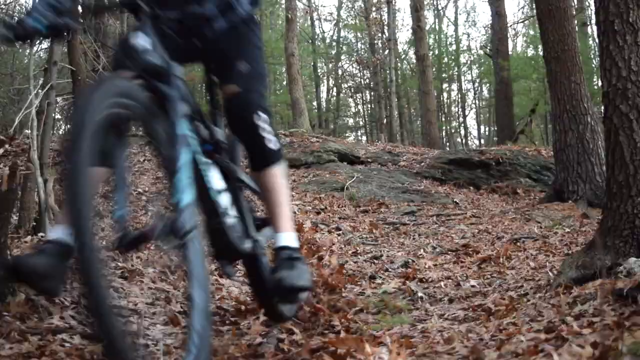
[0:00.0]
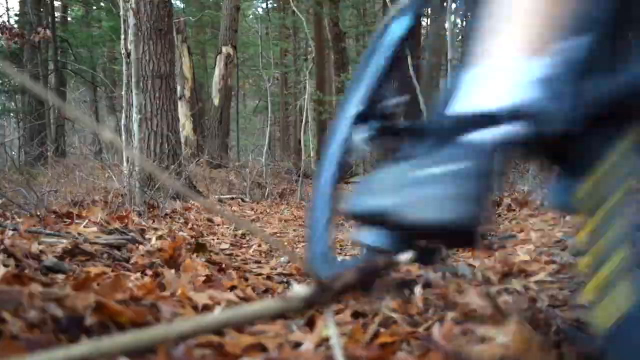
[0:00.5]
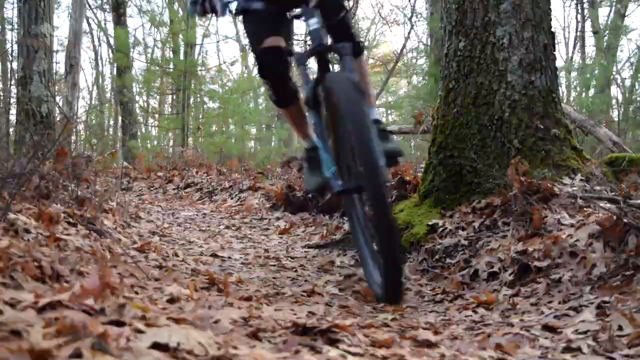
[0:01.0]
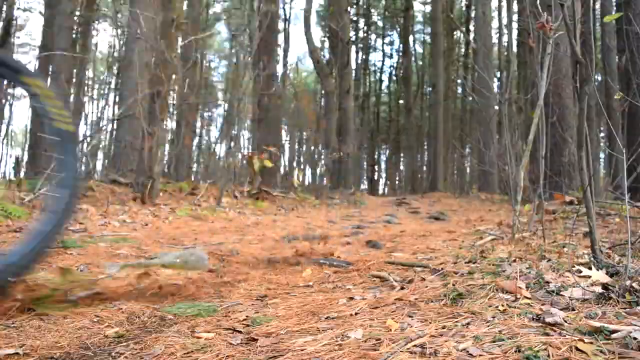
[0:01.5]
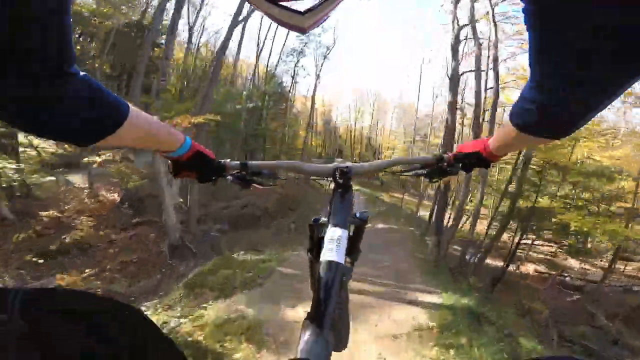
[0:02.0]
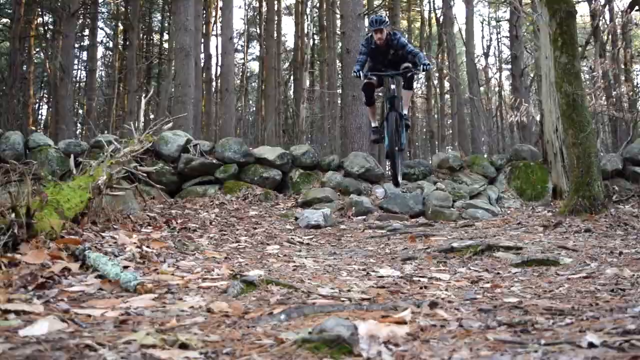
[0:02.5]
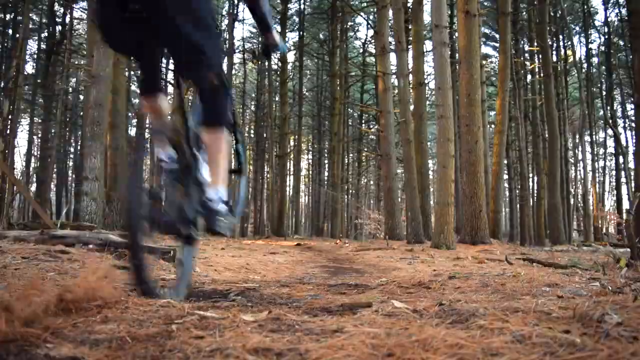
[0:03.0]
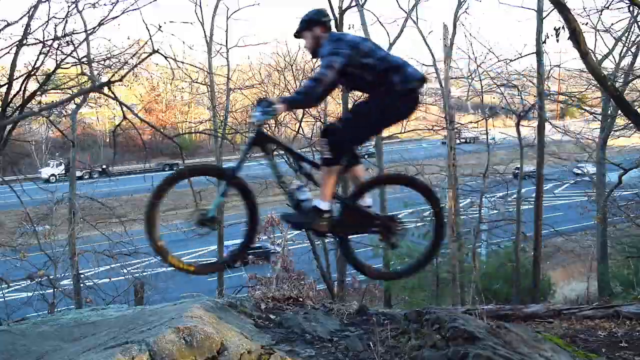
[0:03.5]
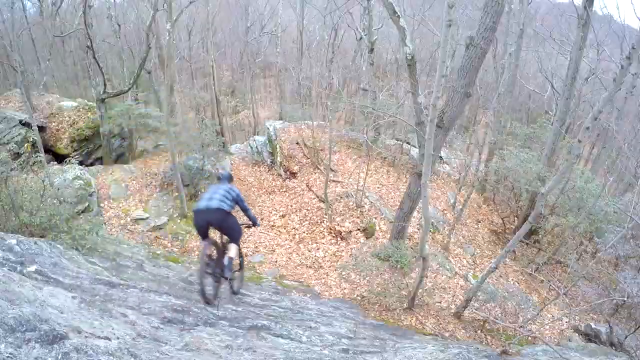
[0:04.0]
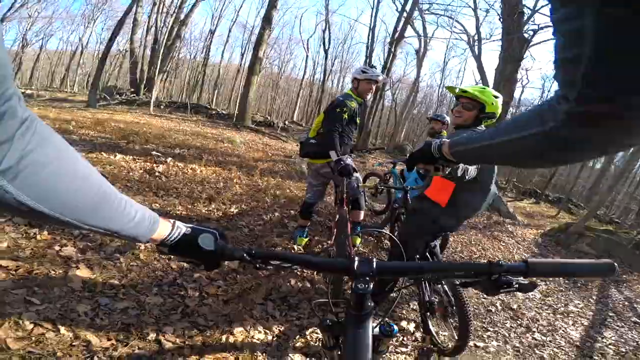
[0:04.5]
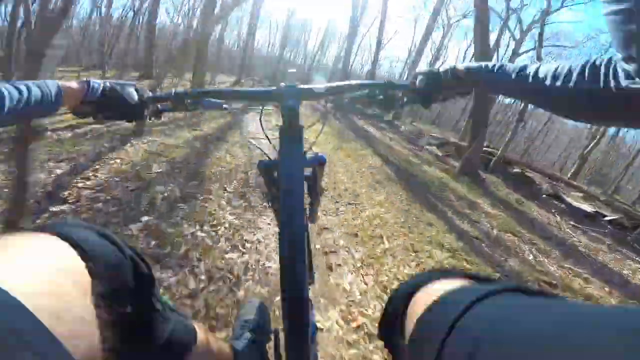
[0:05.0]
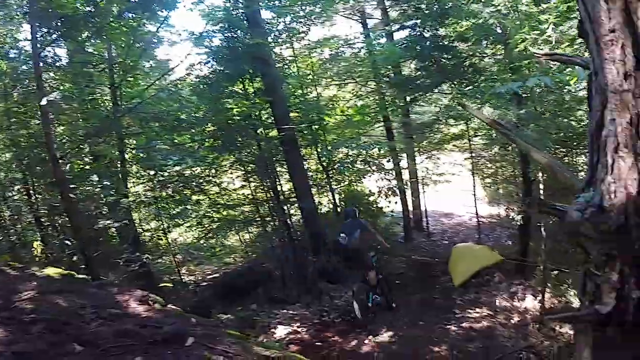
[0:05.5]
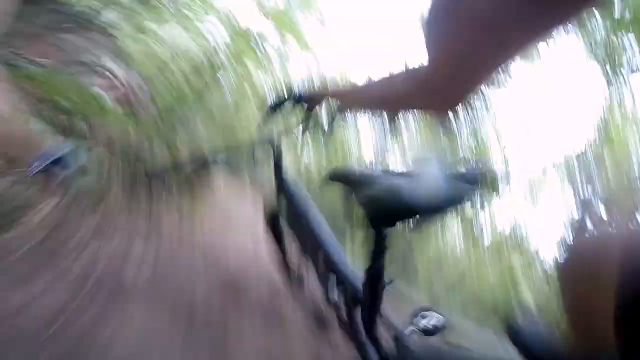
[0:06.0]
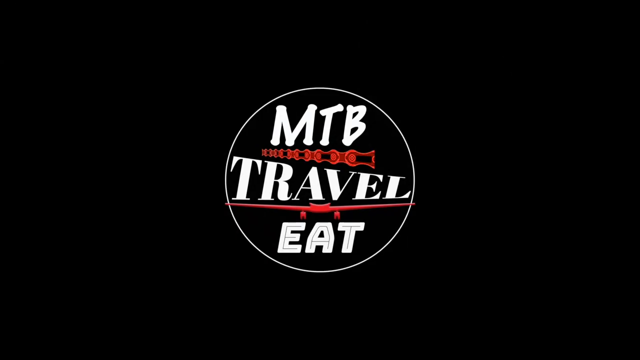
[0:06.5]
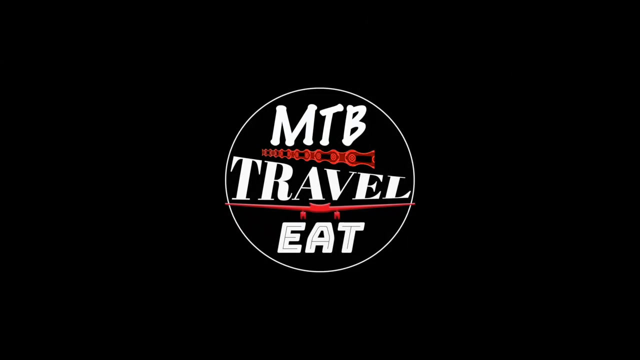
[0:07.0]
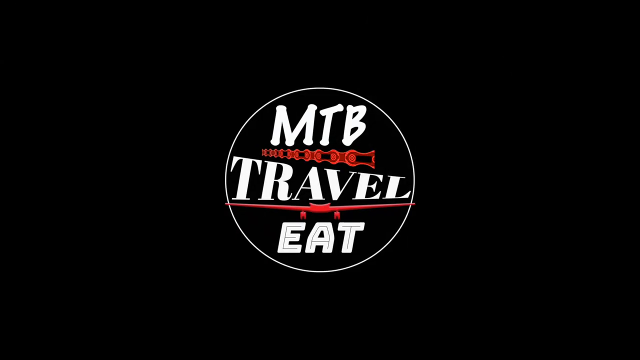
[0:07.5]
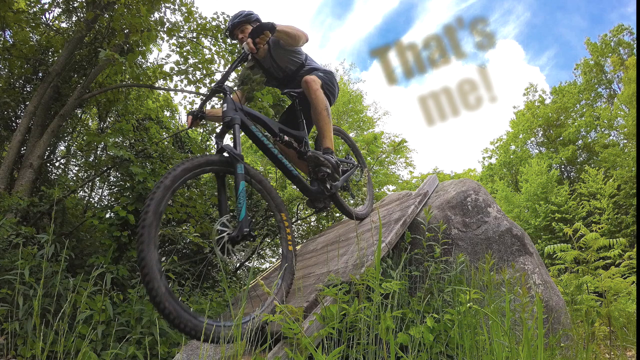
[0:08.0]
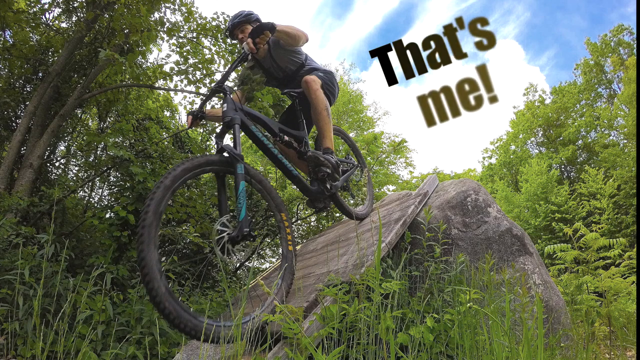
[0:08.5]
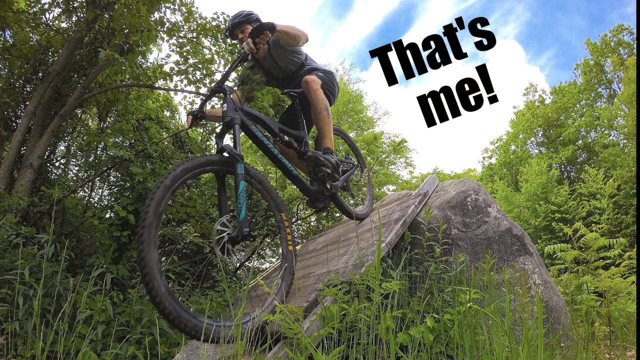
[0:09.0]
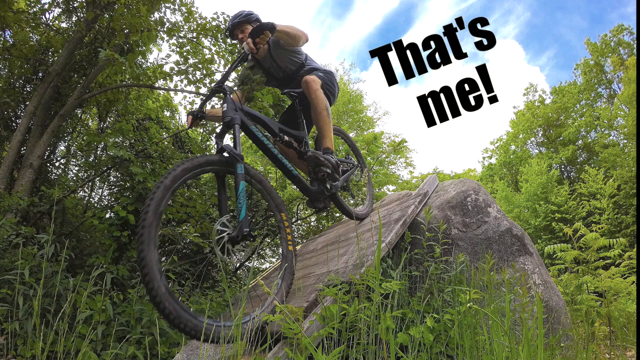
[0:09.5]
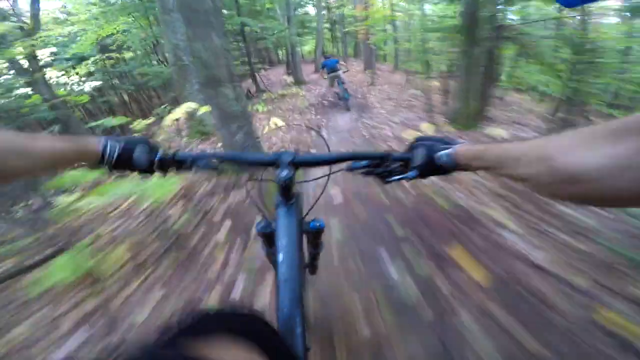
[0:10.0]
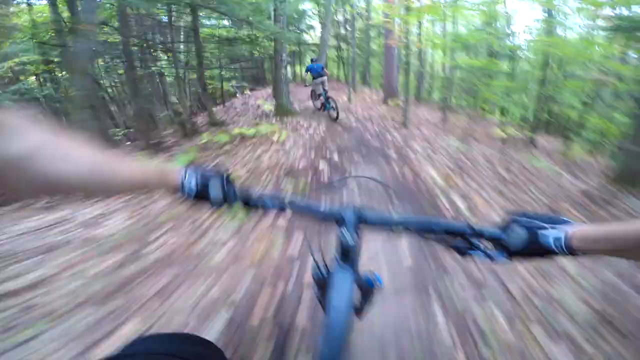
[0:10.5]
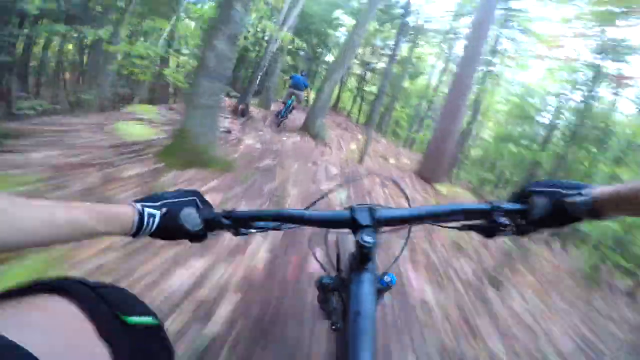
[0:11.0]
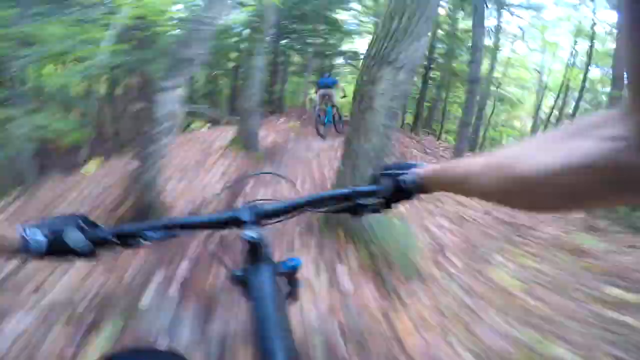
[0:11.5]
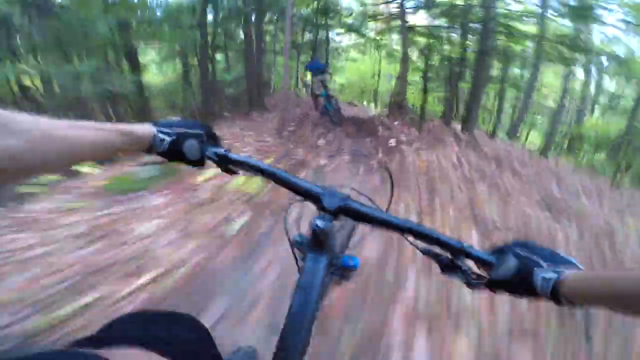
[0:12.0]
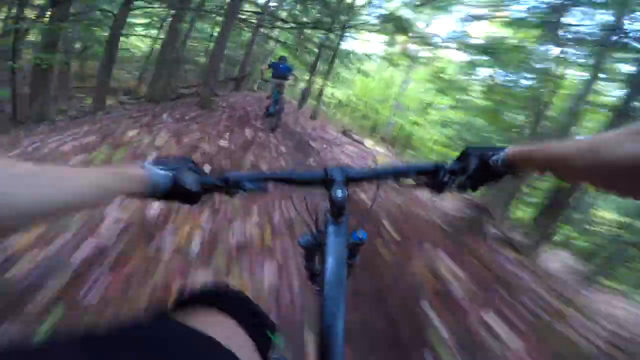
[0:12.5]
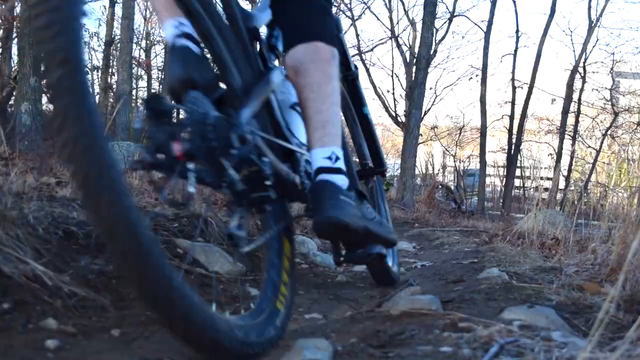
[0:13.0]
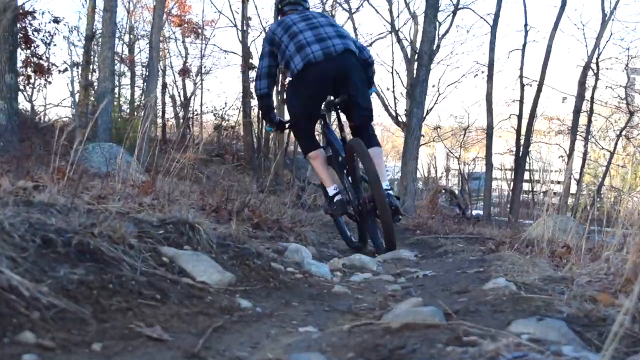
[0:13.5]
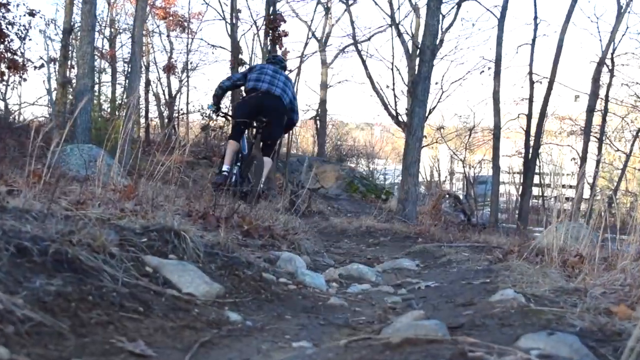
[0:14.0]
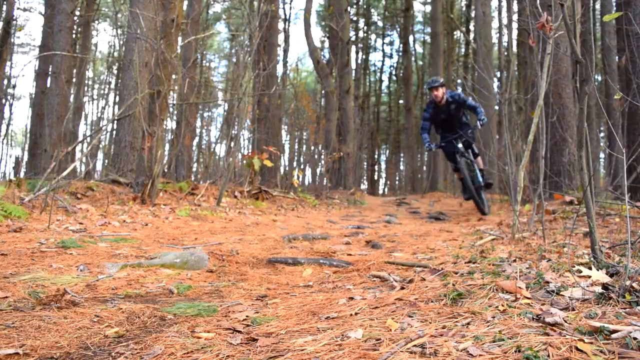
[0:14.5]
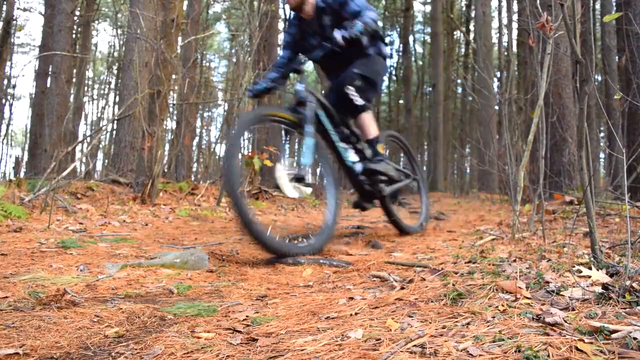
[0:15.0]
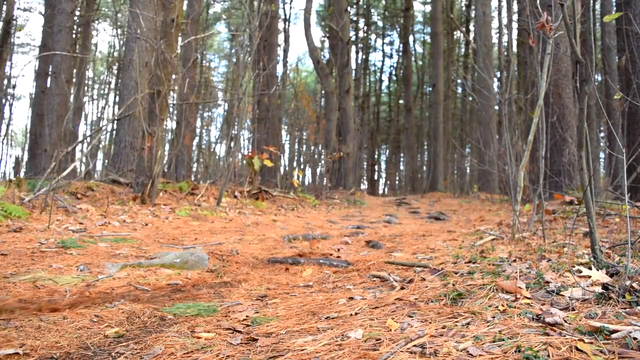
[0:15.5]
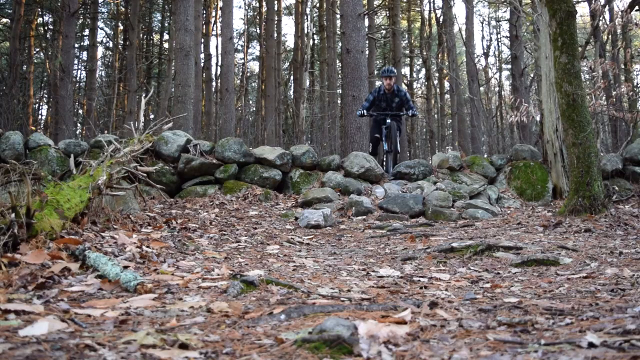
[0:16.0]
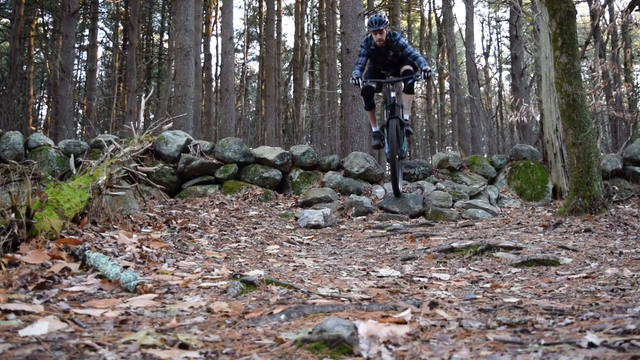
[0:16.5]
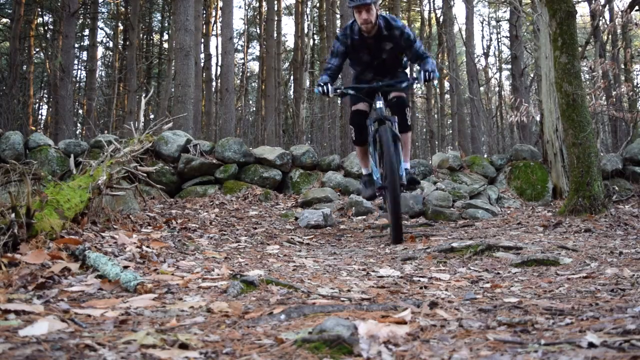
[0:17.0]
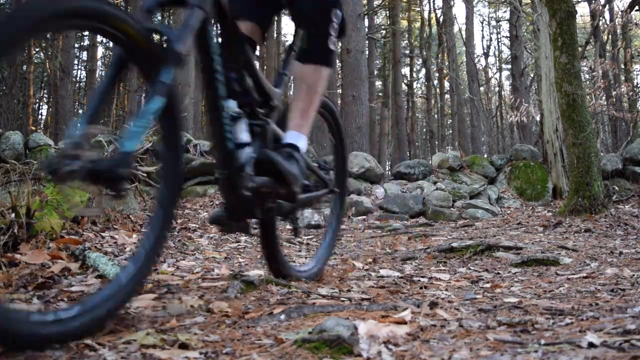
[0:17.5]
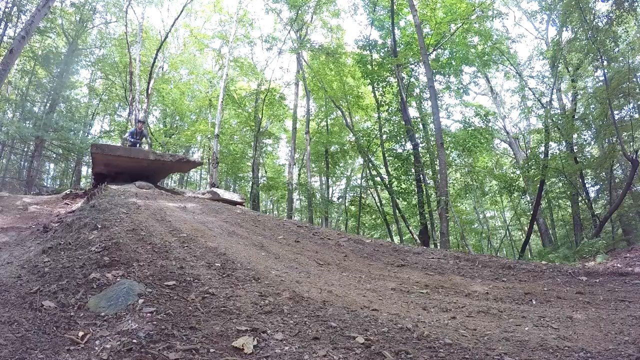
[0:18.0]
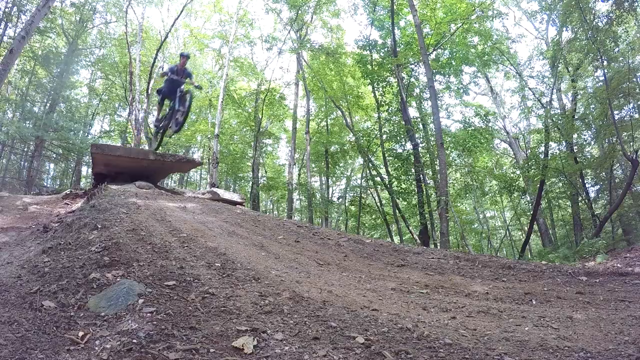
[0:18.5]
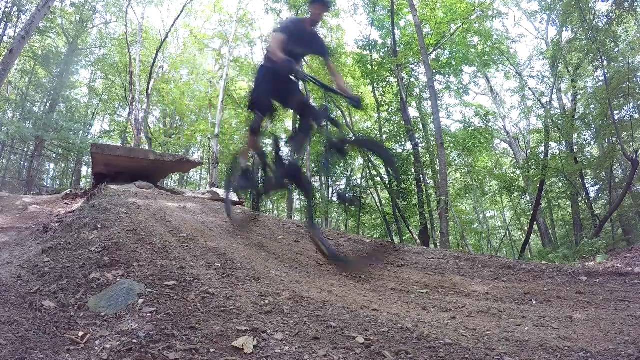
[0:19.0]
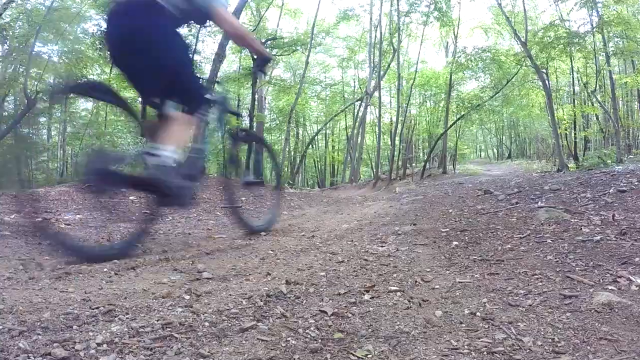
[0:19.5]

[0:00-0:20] A man rides a black bicycle in a heavily wooded forest area. The video cuts rapidly between many different angles shot from the ground, showing only the man's feet and the bicycle's tires, with several angles per second; his face is not visible. A first-person view follows as he rides down the path. A wide shot then shows the man from a distance wearing a helmet, and he rides over a hilly, rocky area. He takes to the air in the woods next to a busy road where cars drive in both directions on both lanes, then lands and keeps riding. Several of his companions, also bicycle riders in bike suits and helmets, appear. After a first-person view, a logo for MTB Travel Eat appears. A still image shows the man riding his bicycle down a steep ramp, with a caption reading "That's me!" next to him. A first-person view shot with a GoPro camera follows him down a dirt path in the woods, and a wide shot shows him riding past some trees. He bikes over some rocks, then off a ramp, lands and continues riding.